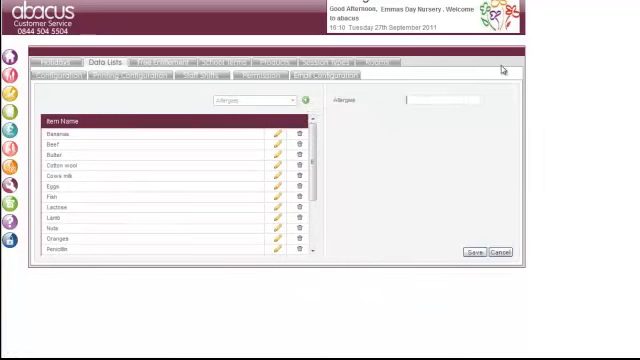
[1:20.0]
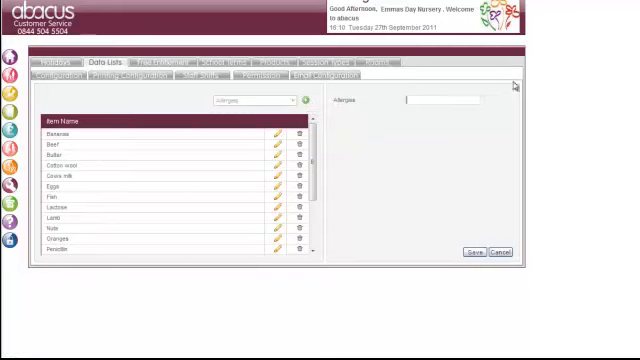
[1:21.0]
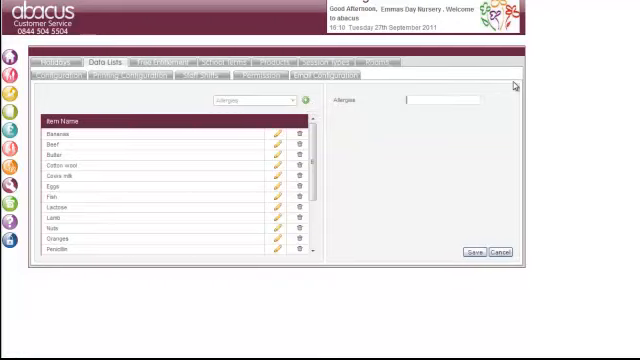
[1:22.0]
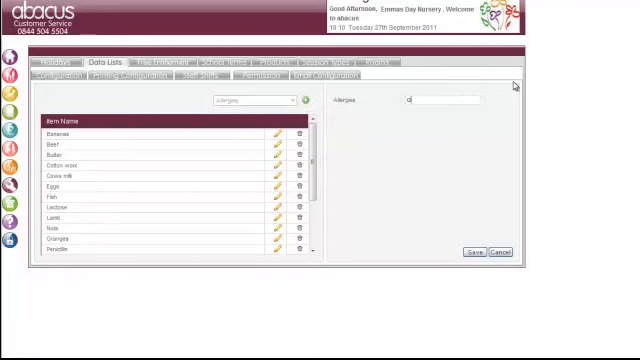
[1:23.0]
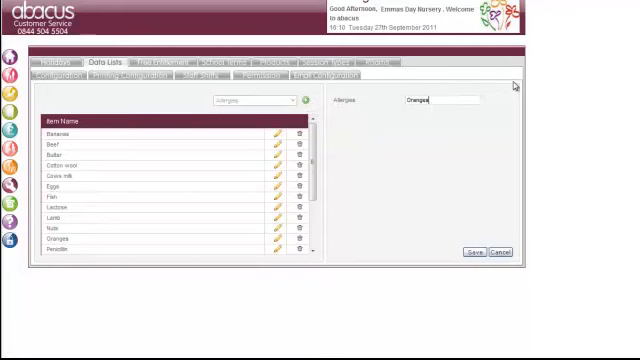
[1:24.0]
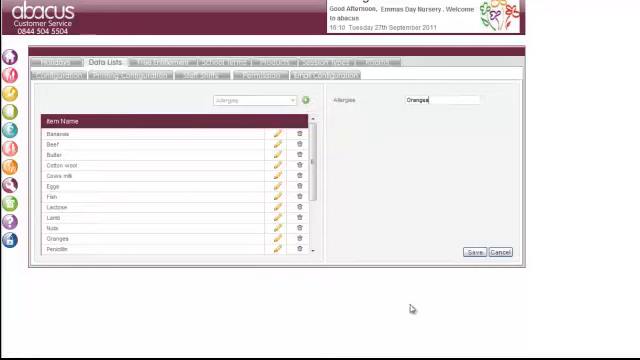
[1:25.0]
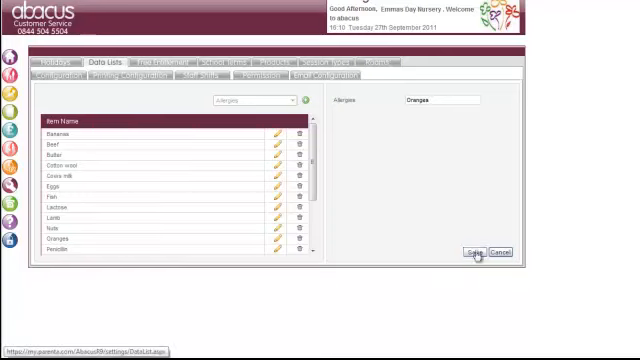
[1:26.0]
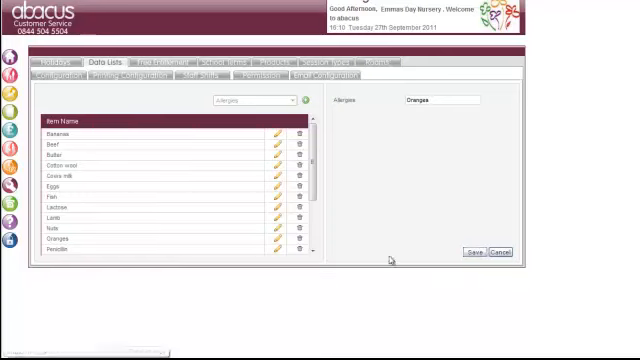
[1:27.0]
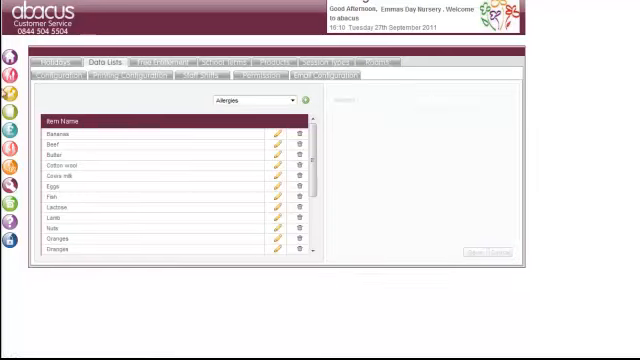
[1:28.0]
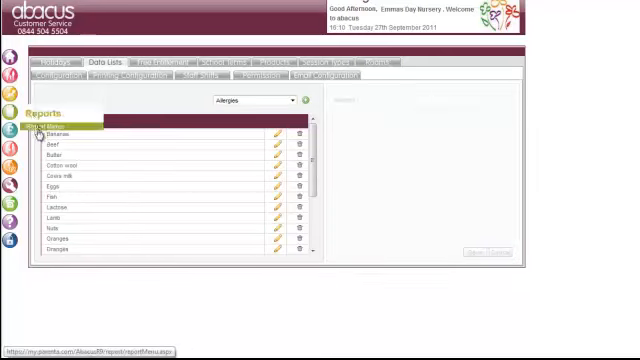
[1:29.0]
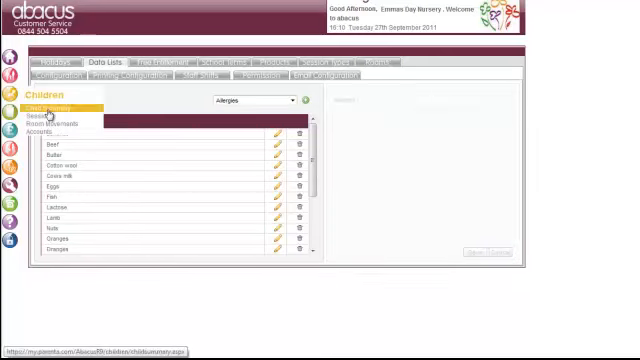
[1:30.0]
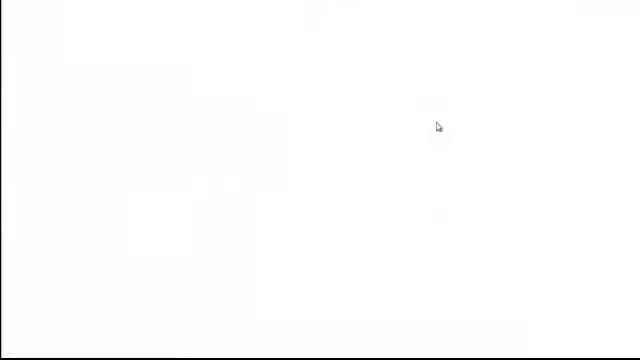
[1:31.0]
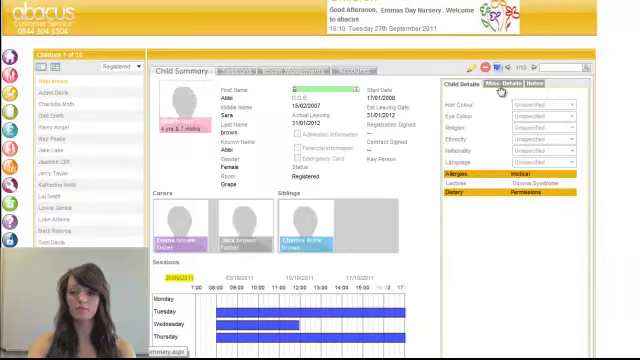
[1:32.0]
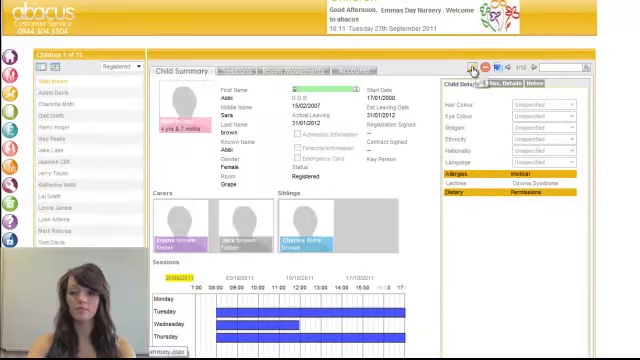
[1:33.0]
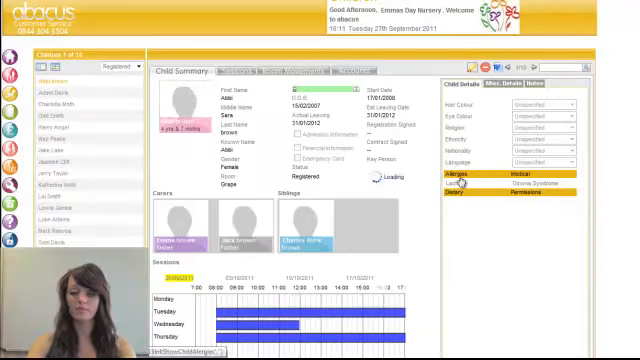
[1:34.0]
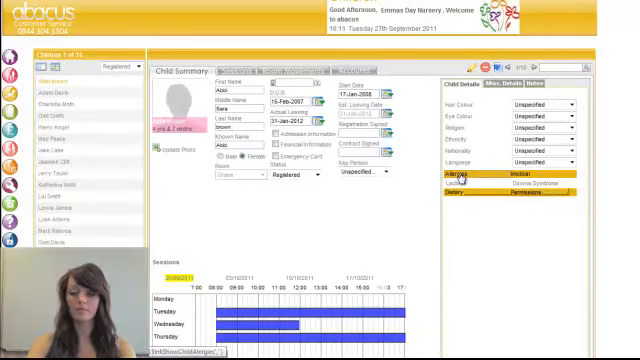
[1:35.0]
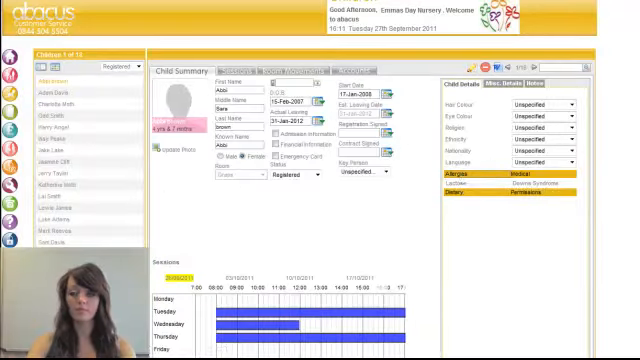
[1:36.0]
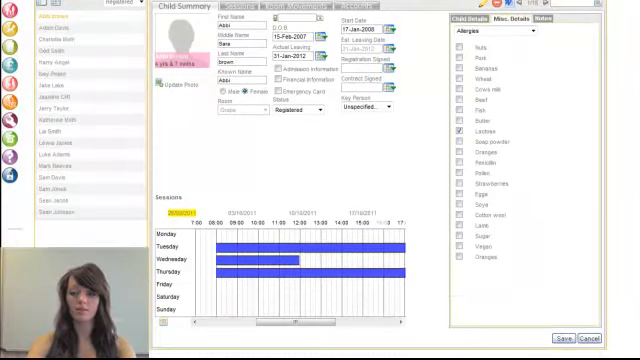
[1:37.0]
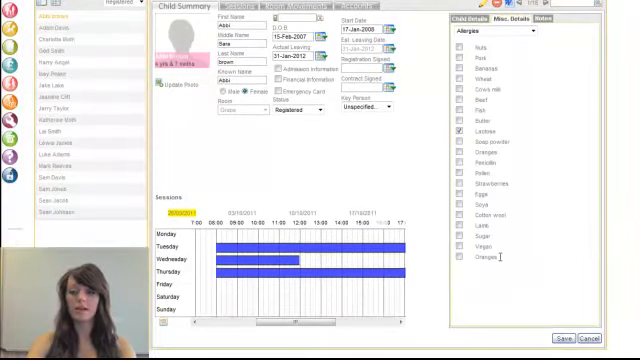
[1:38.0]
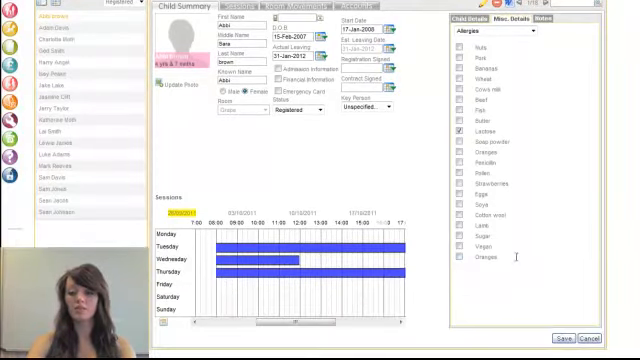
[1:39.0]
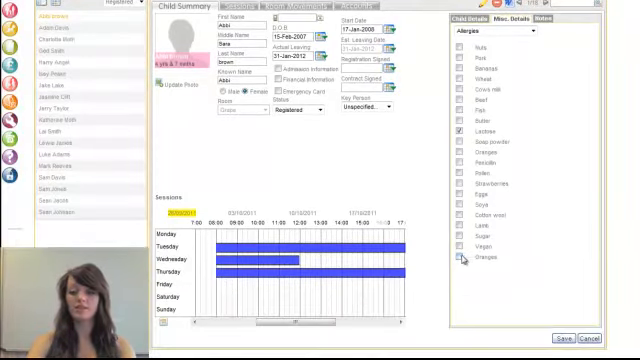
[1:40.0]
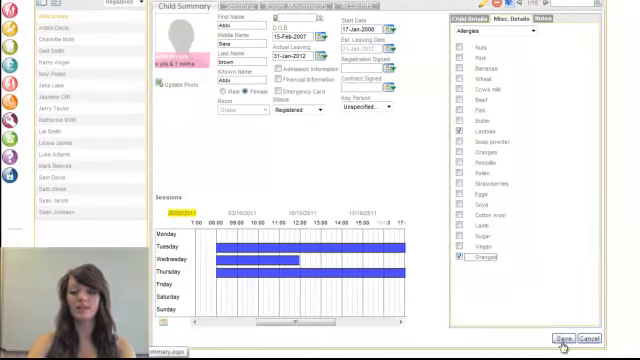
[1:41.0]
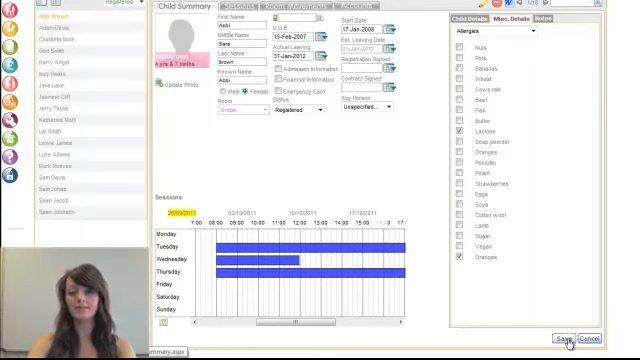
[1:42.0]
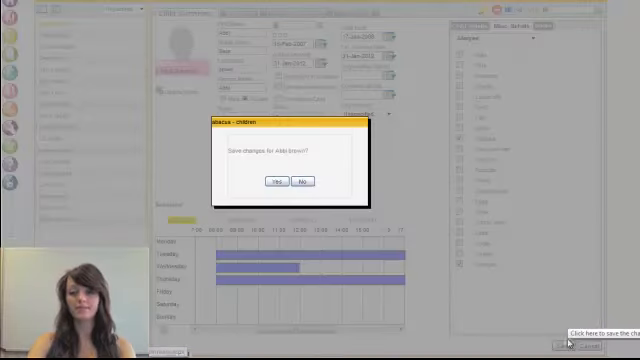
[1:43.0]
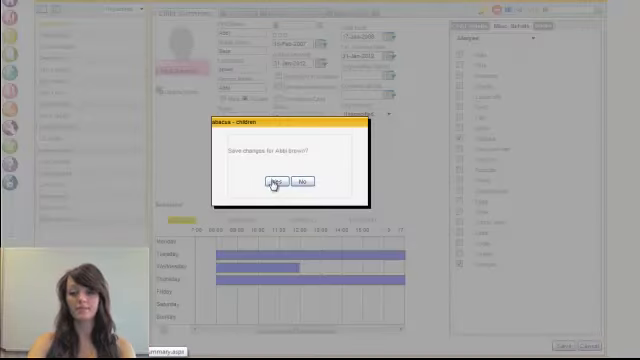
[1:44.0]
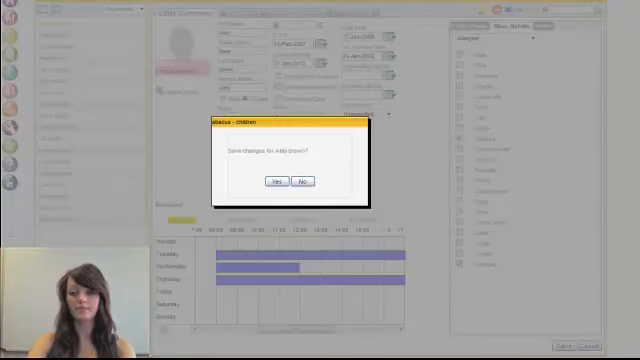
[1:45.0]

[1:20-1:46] The settings section of the Abacus customer service site is shown with the data list option, open to allergies. There are some allergies to choose from, but the woman clicks the plus icon to add a new allergy, types "oranges" into the blank space and saves it. She then goes back to Children and the child summary, and the woman now appears on the left side of the video. She clicks the edit option with the pencil icon and shows the allergies in the medical details, where the new option she made, an allergy to oranges, can be chosen. The video's resolution is very low. She saves the changes.